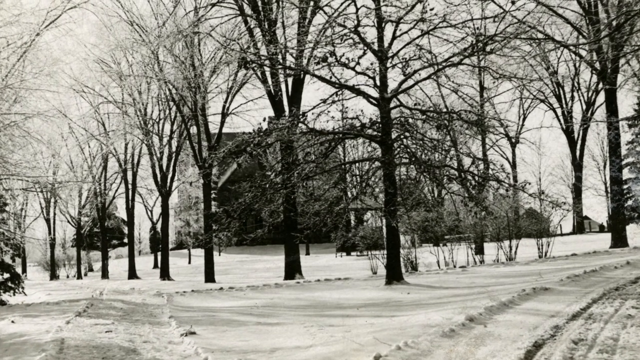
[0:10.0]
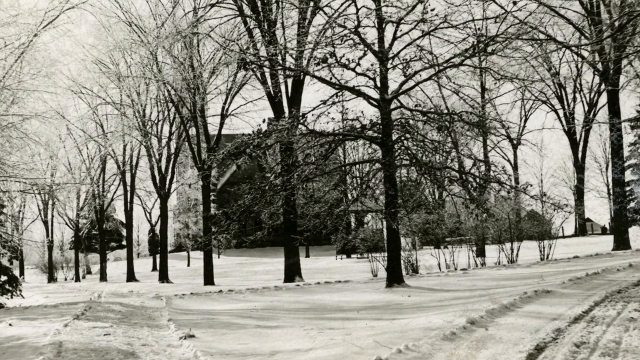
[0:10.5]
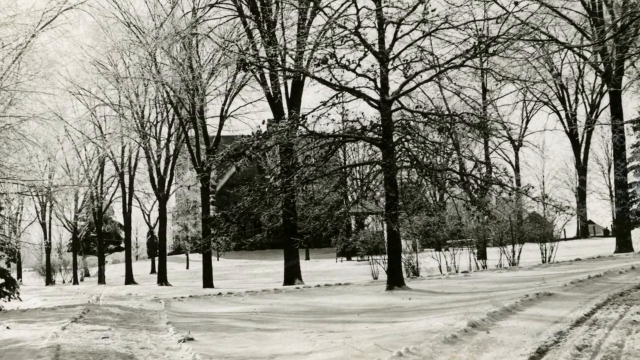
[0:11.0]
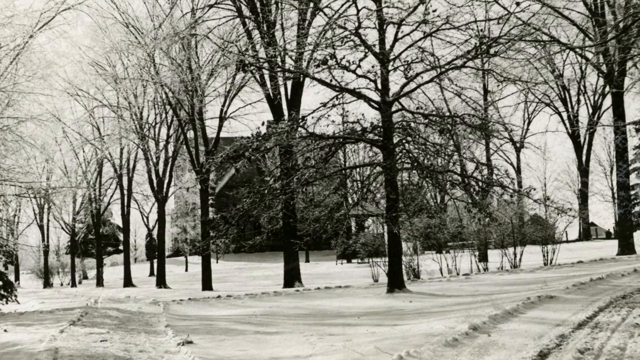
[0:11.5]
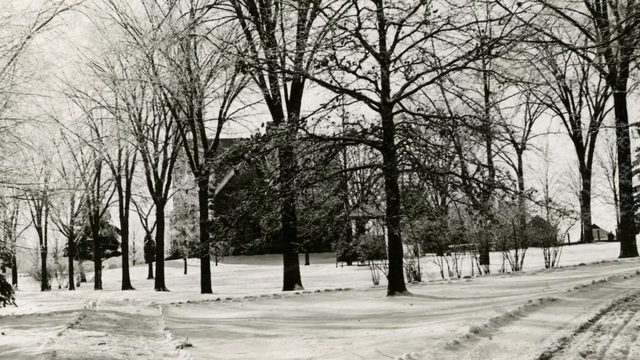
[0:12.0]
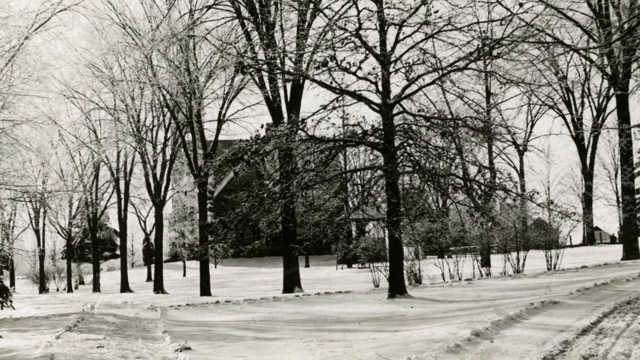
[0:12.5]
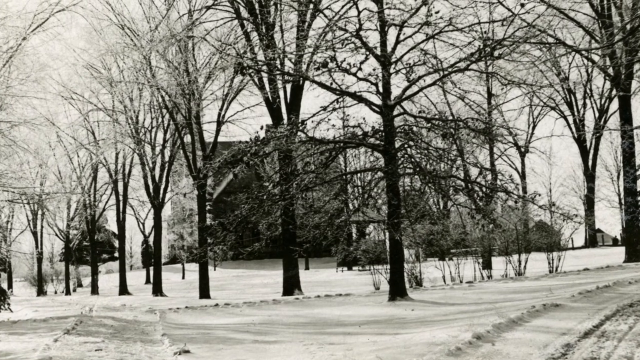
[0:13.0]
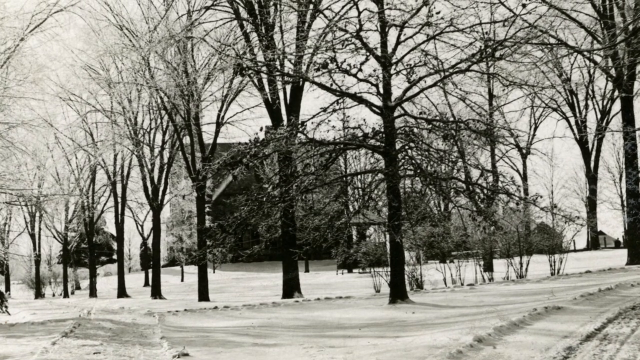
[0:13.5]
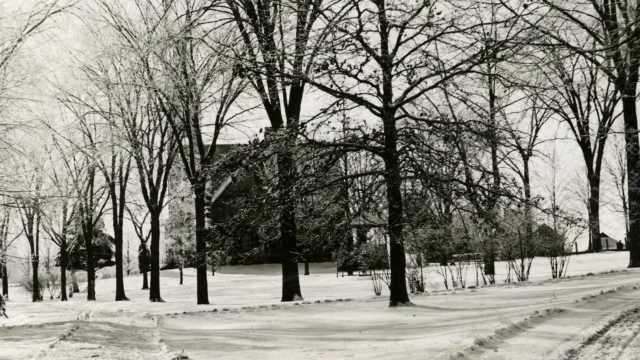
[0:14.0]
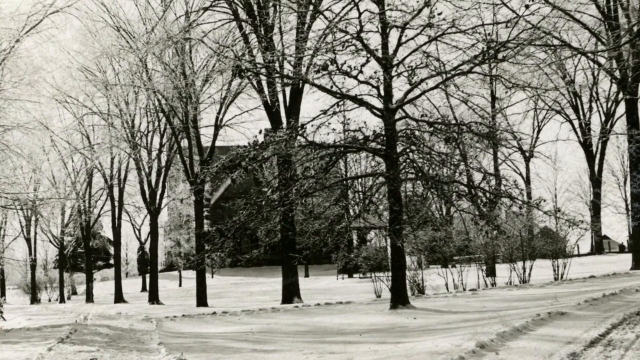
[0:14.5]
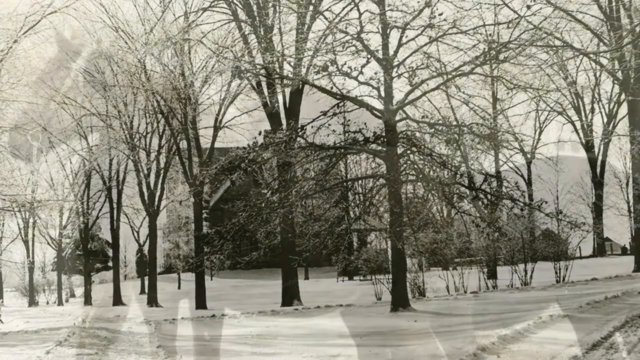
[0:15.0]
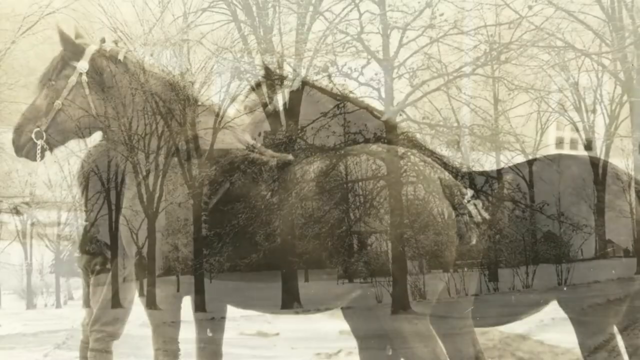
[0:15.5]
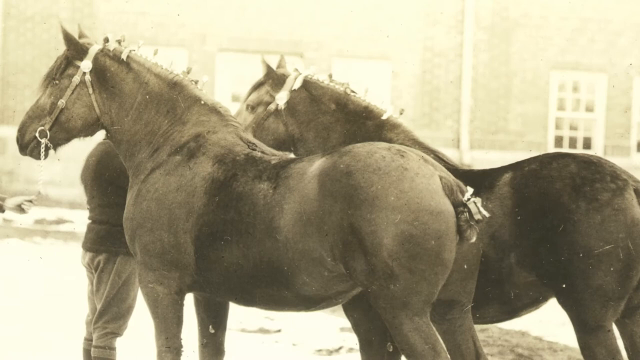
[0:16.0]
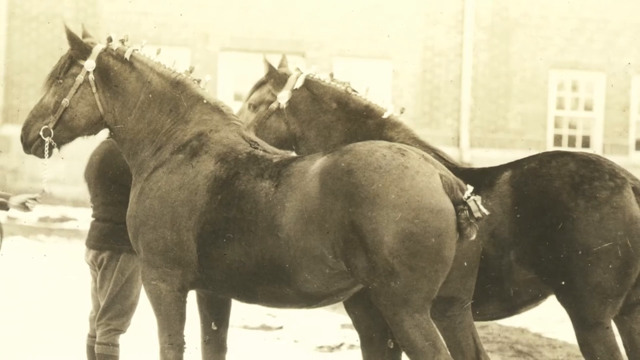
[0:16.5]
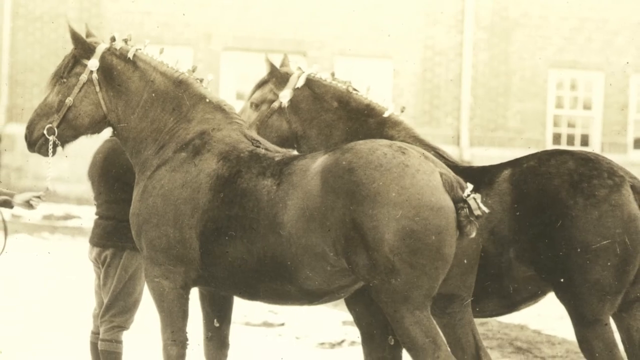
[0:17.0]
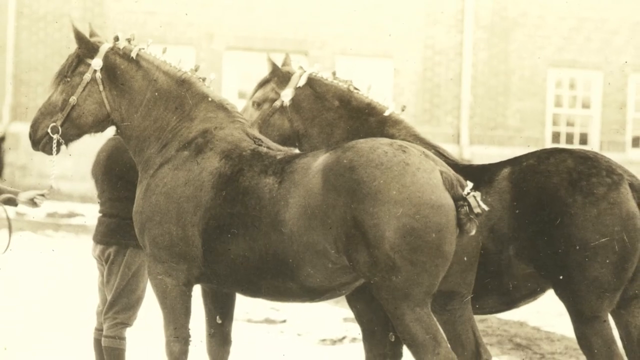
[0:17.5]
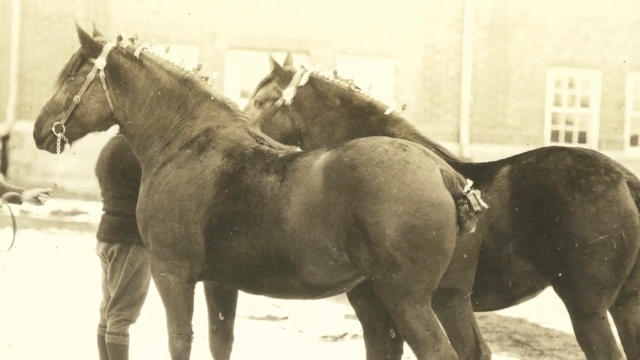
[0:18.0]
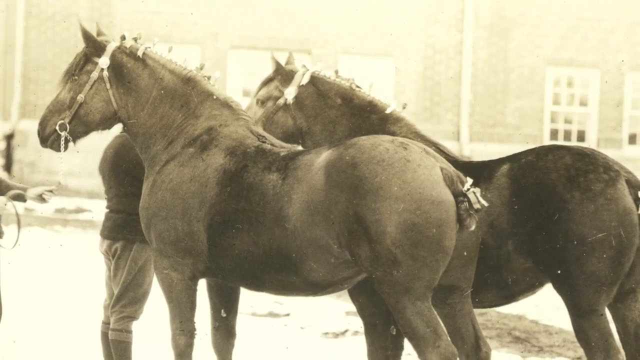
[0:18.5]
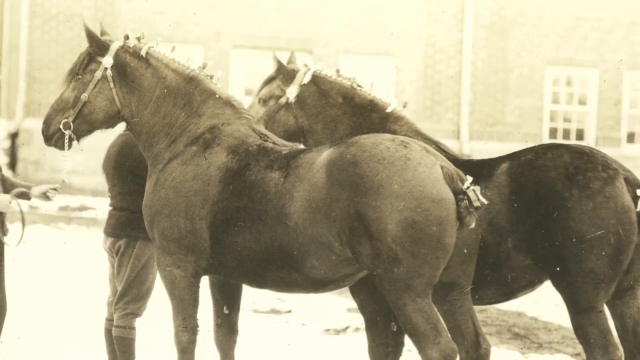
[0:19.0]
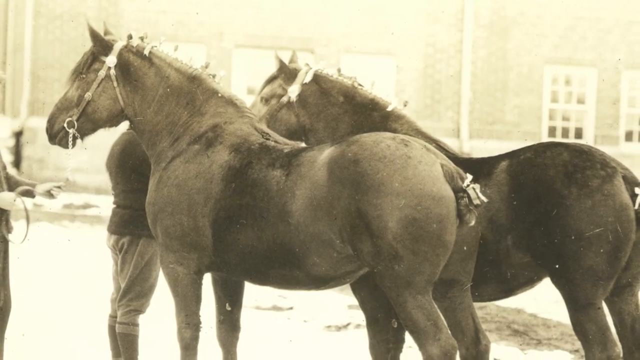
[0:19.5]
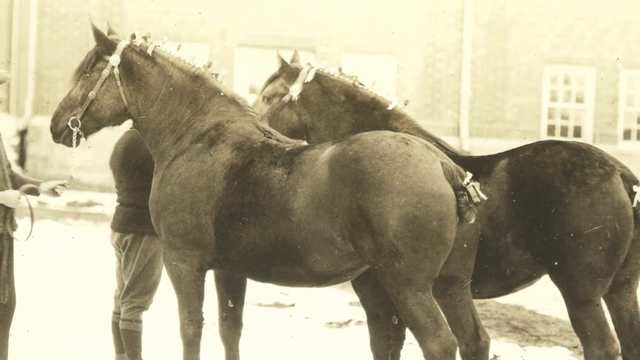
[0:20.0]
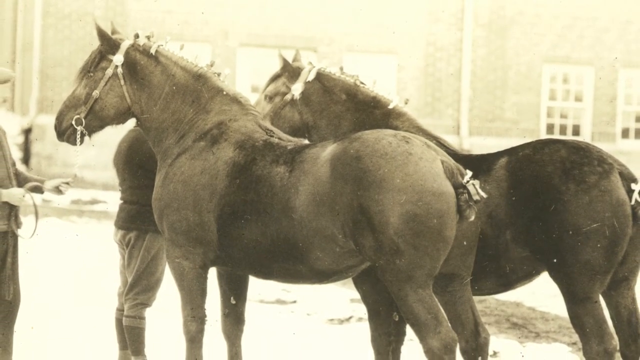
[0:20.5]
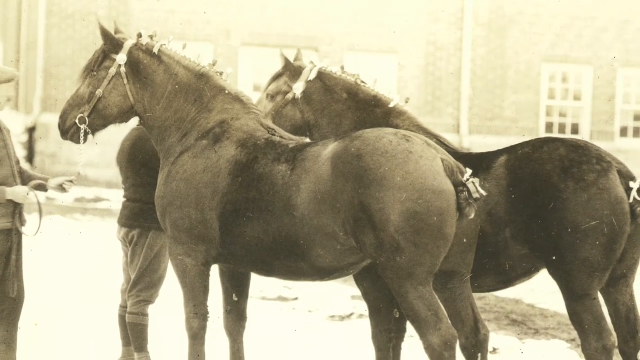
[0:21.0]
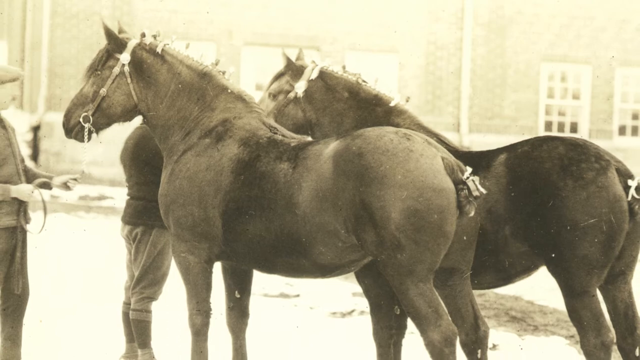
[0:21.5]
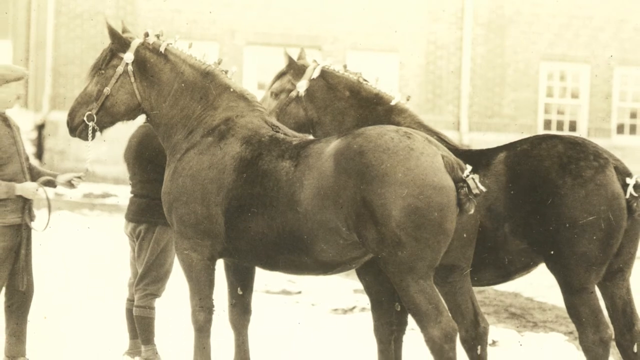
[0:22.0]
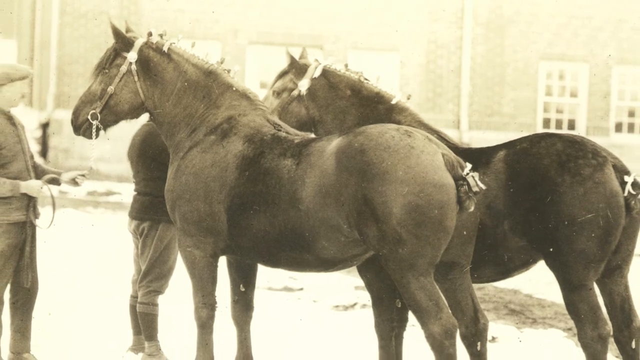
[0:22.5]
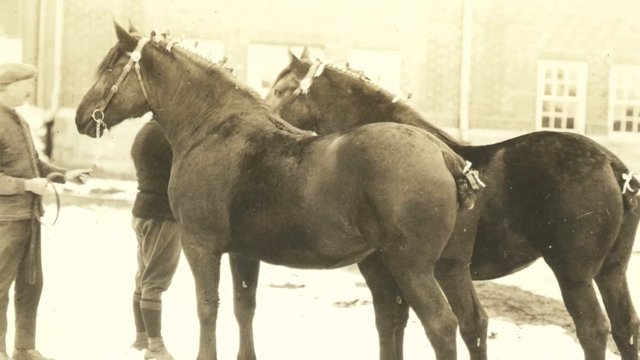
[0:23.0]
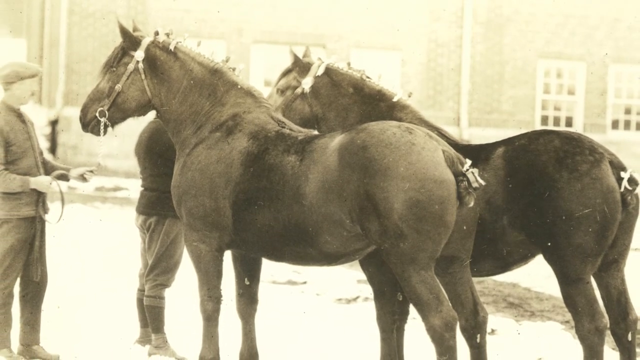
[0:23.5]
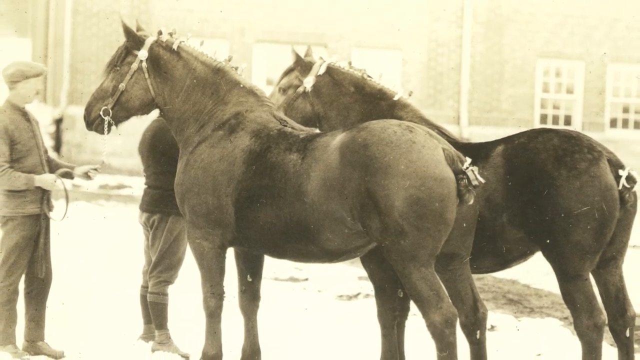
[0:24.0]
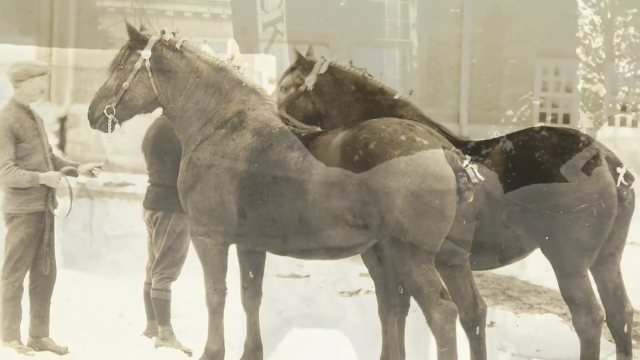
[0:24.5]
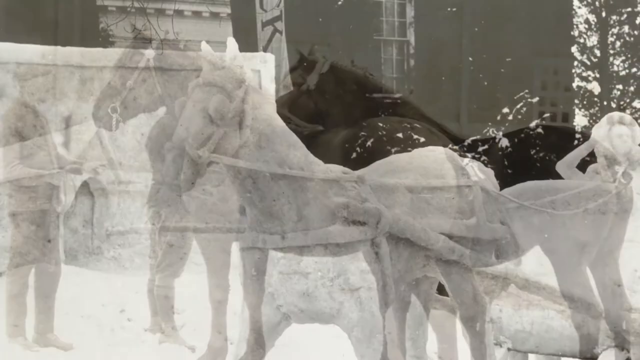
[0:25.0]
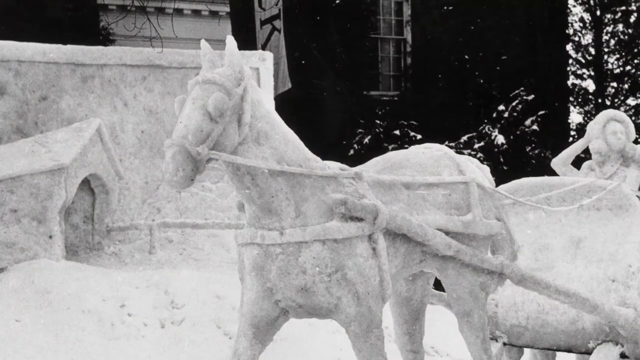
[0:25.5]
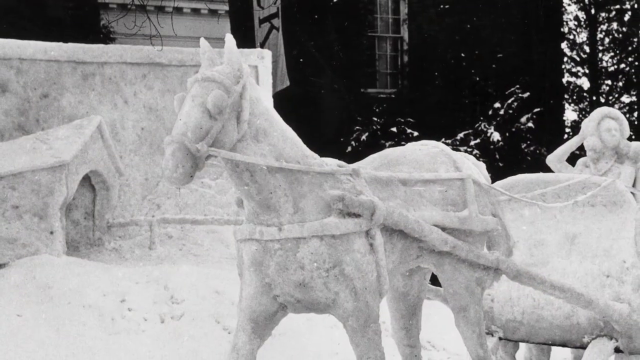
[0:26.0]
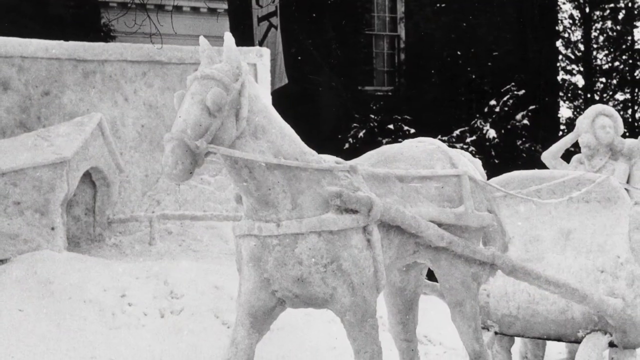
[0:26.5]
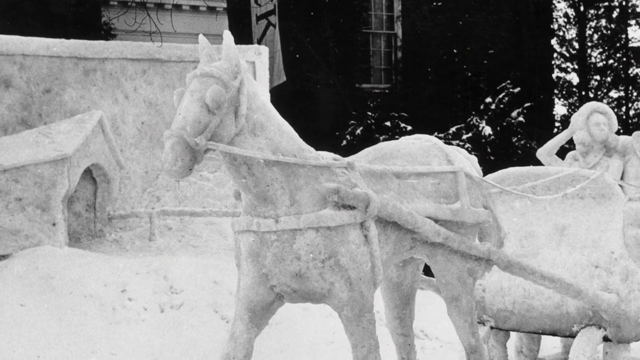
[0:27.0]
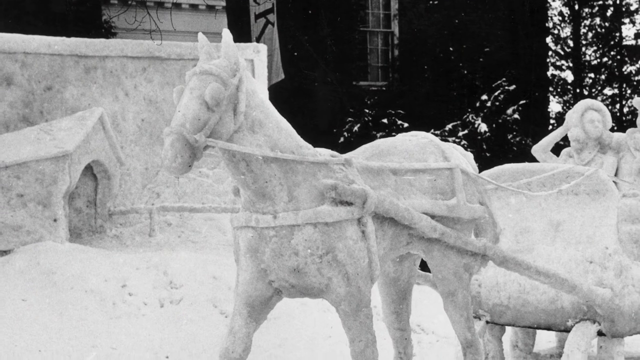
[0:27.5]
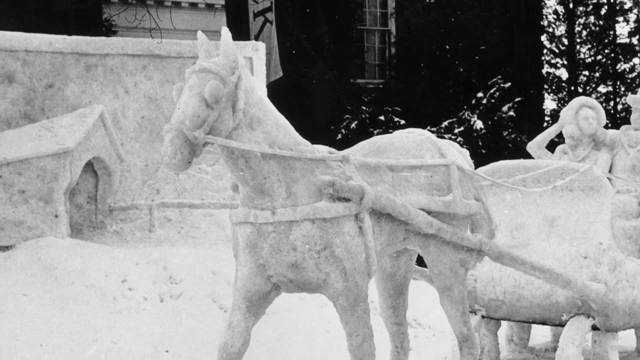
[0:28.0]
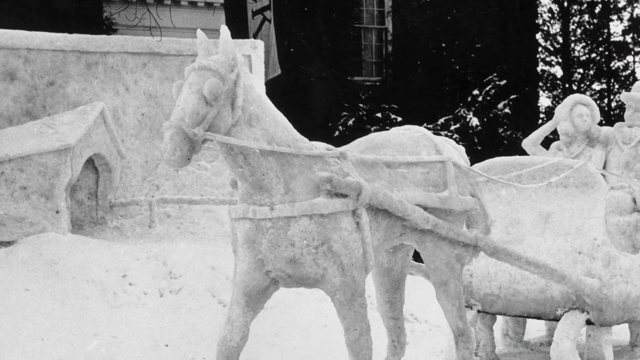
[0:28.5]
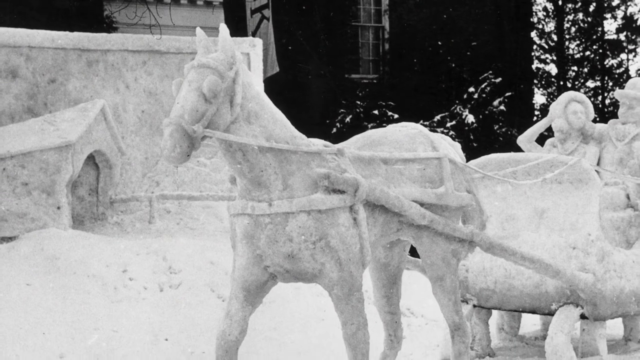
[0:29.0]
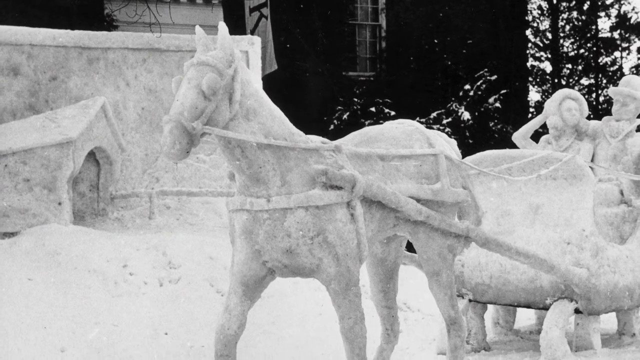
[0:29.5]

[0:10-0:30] The view zooms in on the same snowy scene, then a sepia picture of two horses appears; they look really beefy. Next comes a snow sculpture of other horses and a carriage. The black-and-white footage looks older, perhaps historical, though it is not very grainy and the quality looks fairly decent.